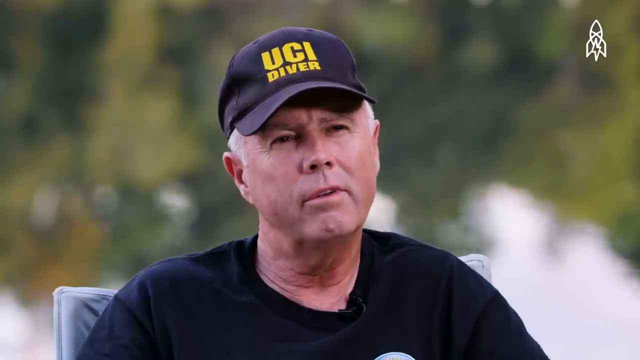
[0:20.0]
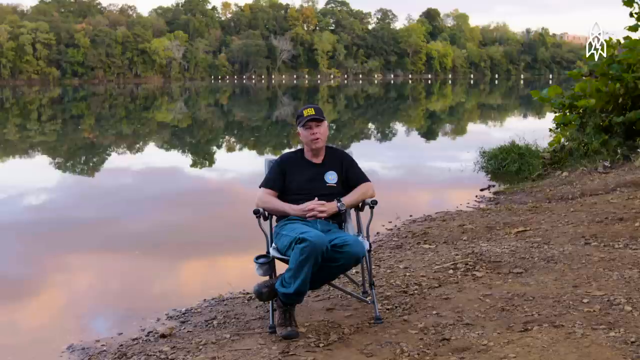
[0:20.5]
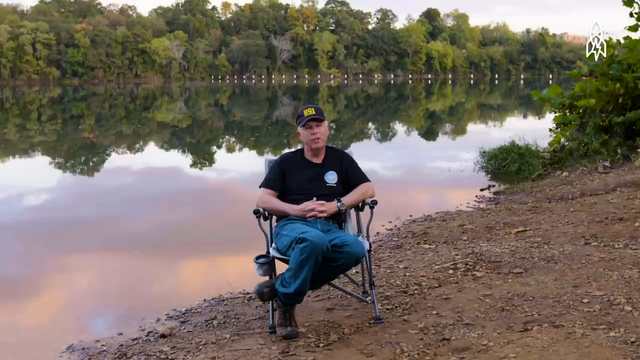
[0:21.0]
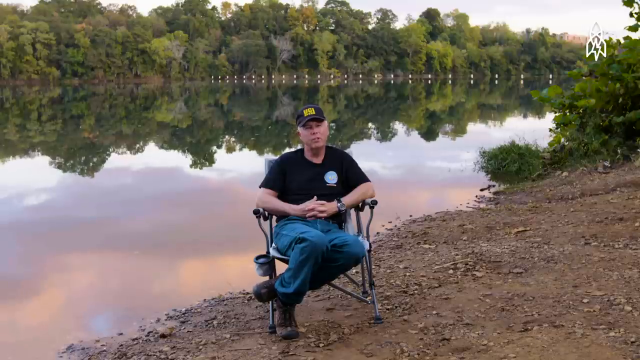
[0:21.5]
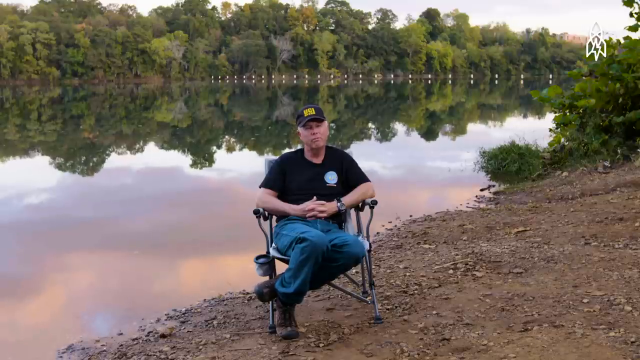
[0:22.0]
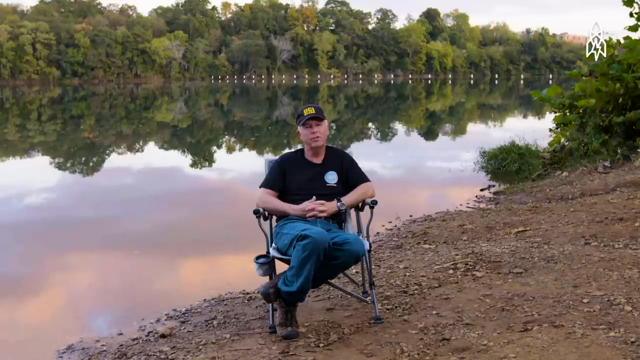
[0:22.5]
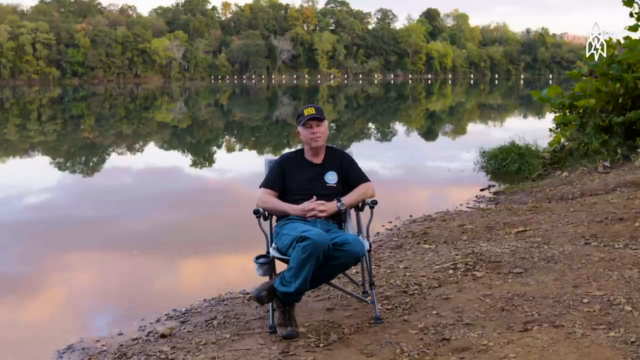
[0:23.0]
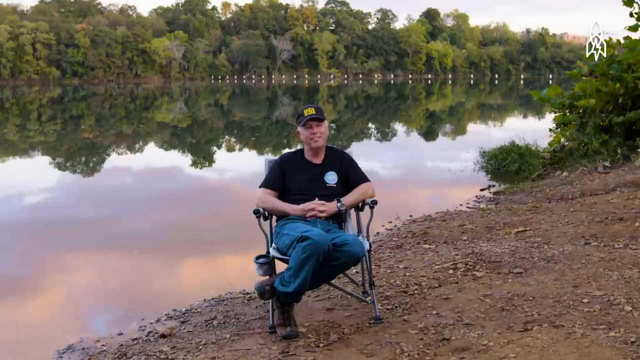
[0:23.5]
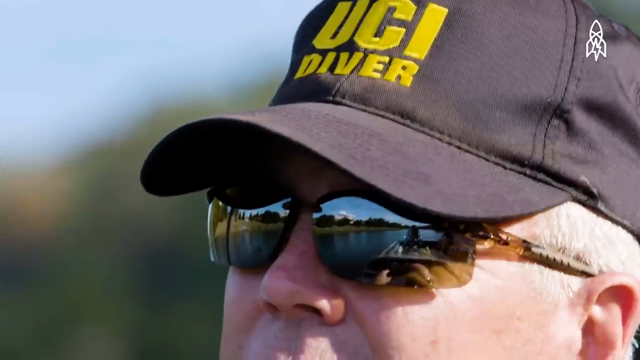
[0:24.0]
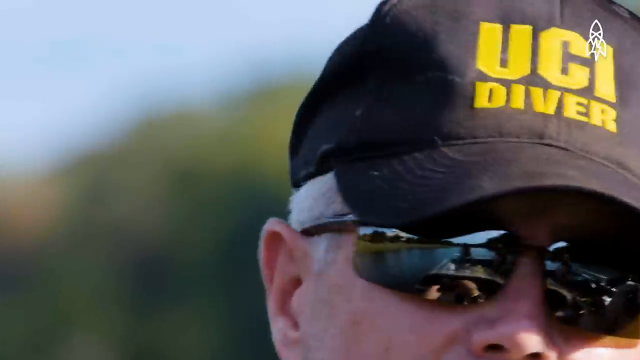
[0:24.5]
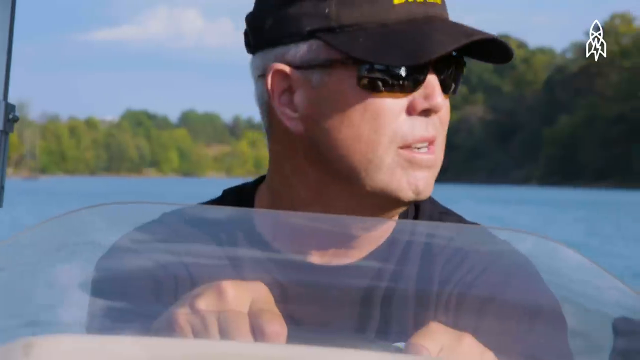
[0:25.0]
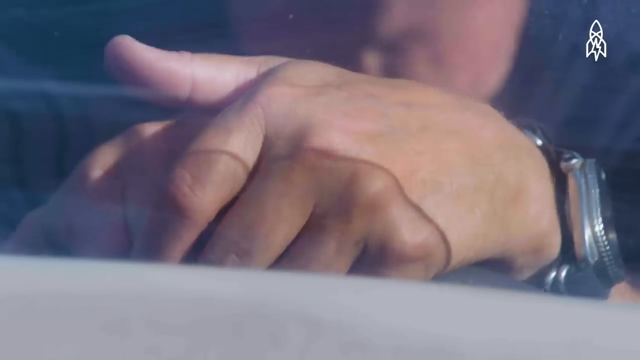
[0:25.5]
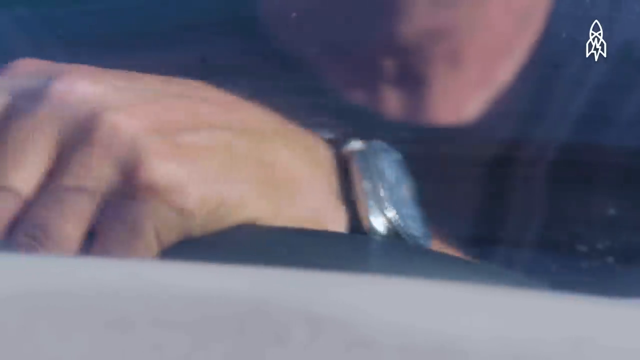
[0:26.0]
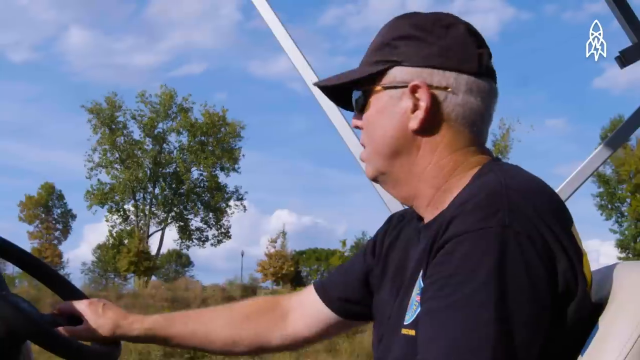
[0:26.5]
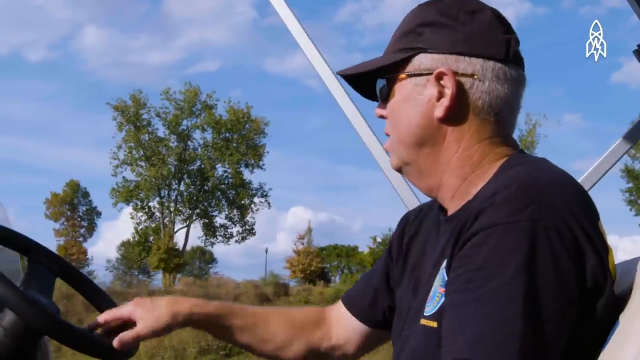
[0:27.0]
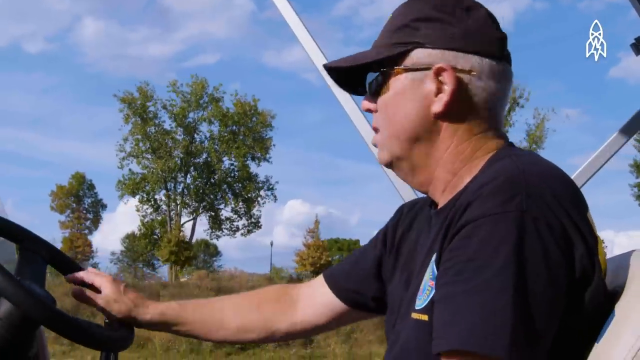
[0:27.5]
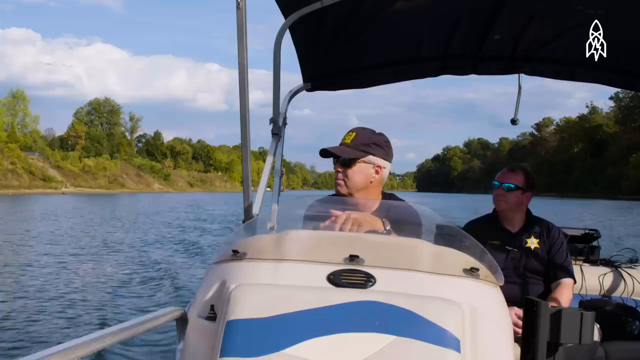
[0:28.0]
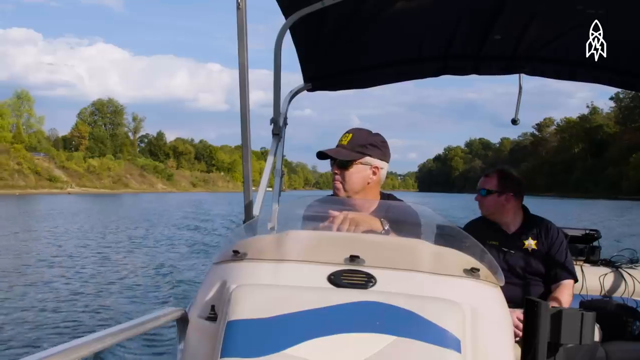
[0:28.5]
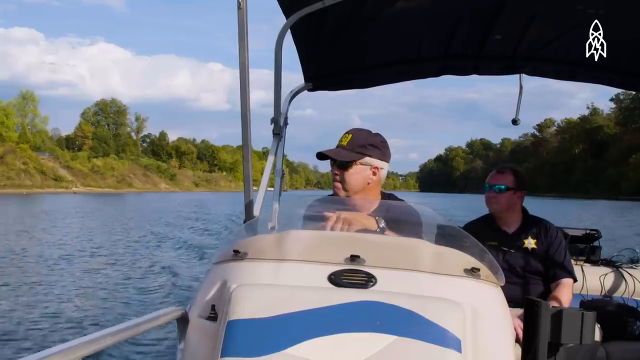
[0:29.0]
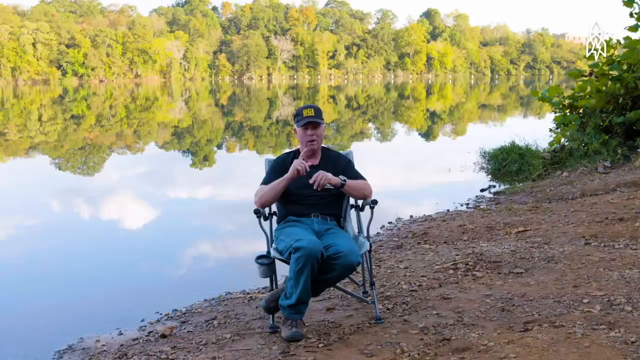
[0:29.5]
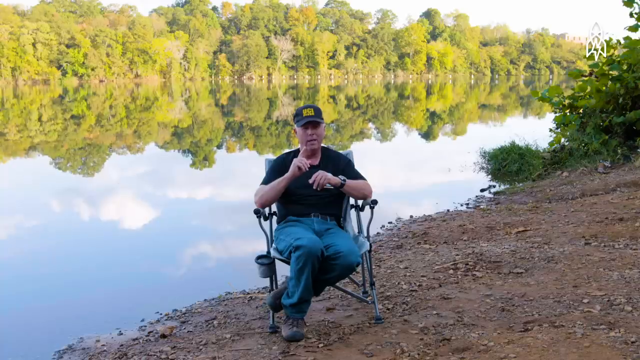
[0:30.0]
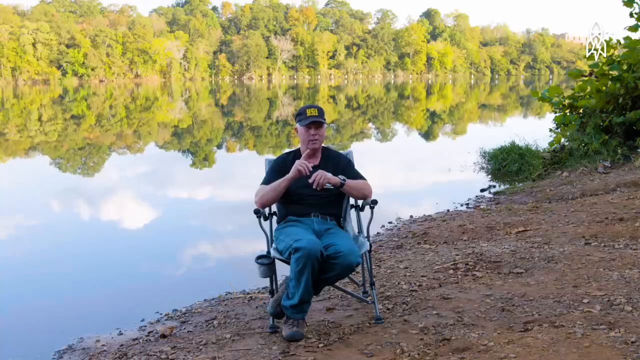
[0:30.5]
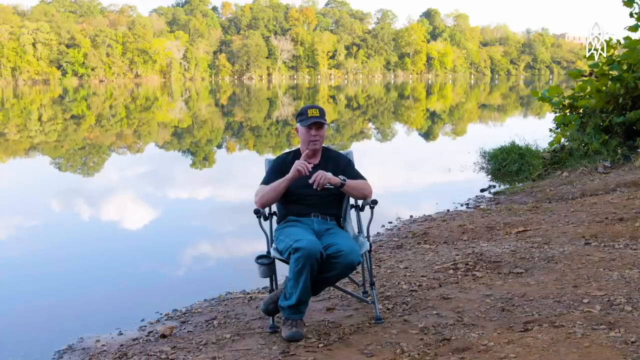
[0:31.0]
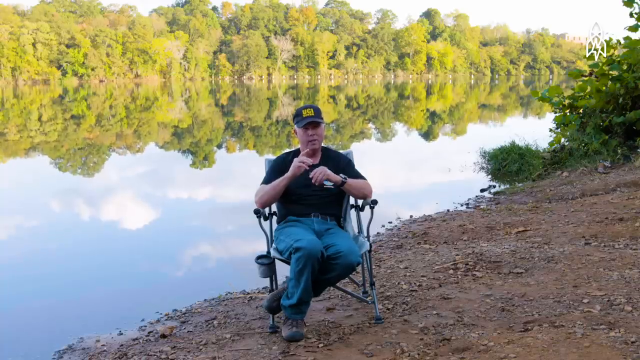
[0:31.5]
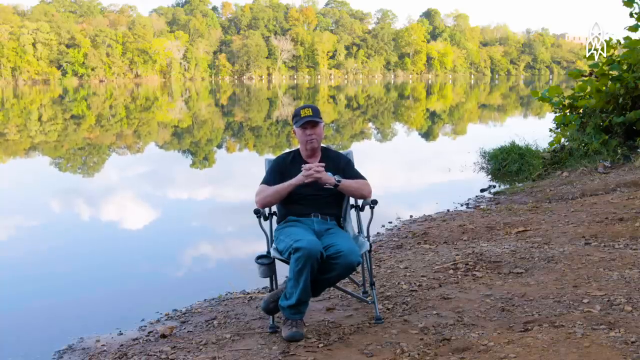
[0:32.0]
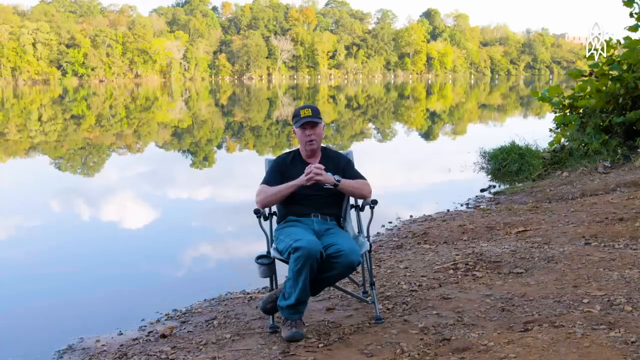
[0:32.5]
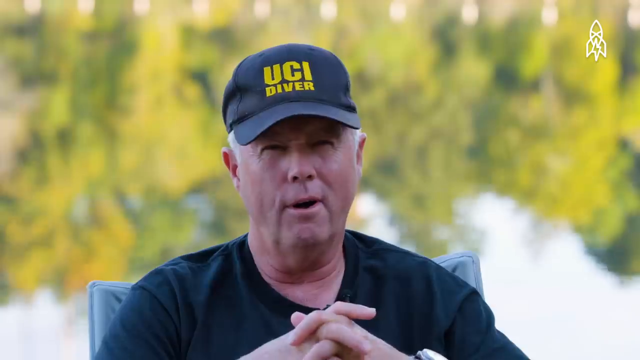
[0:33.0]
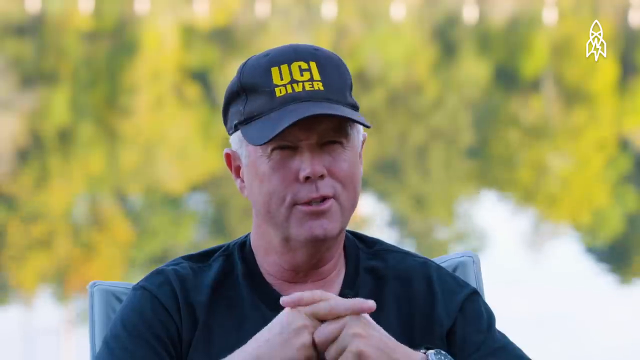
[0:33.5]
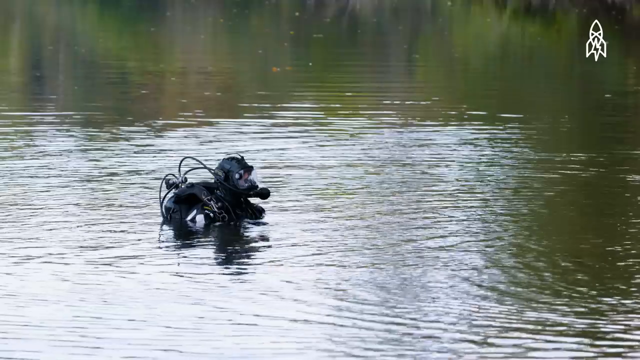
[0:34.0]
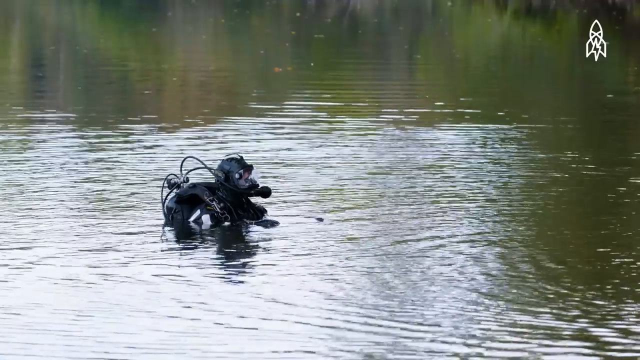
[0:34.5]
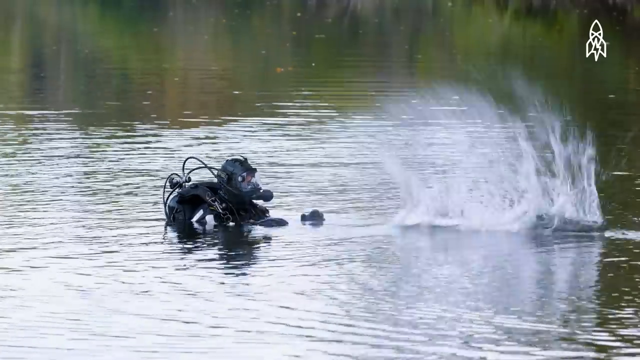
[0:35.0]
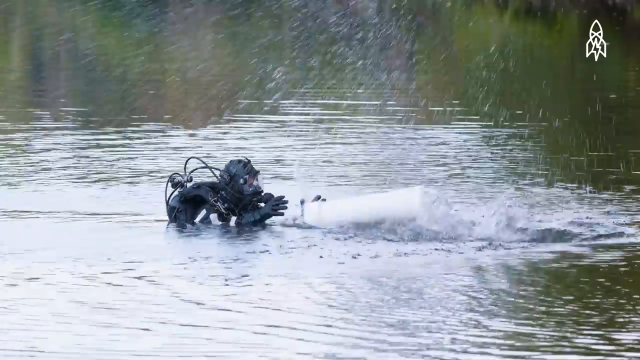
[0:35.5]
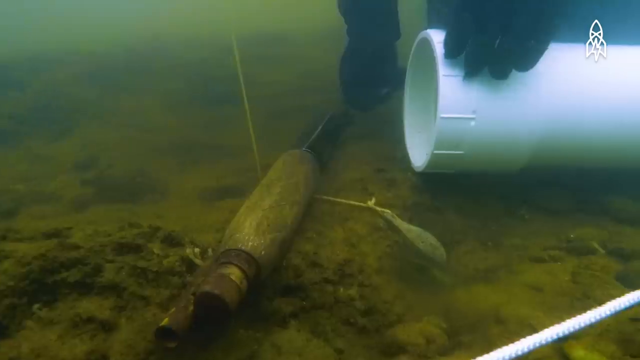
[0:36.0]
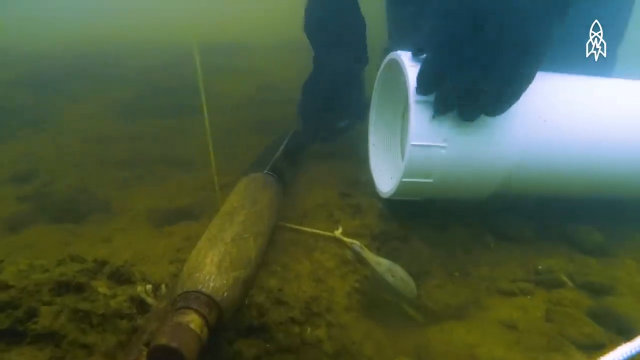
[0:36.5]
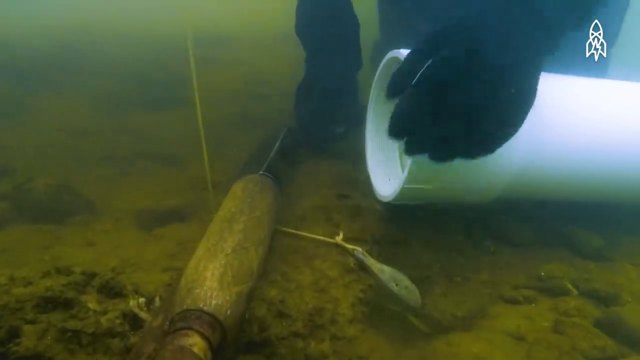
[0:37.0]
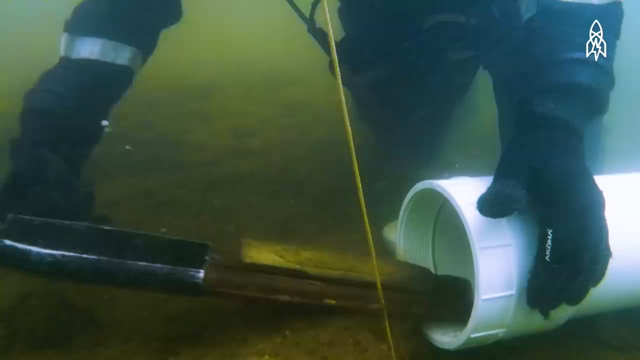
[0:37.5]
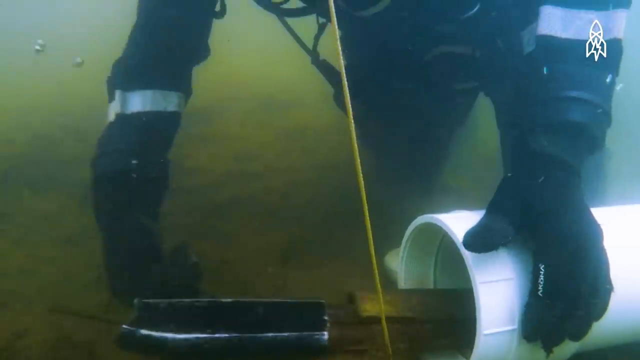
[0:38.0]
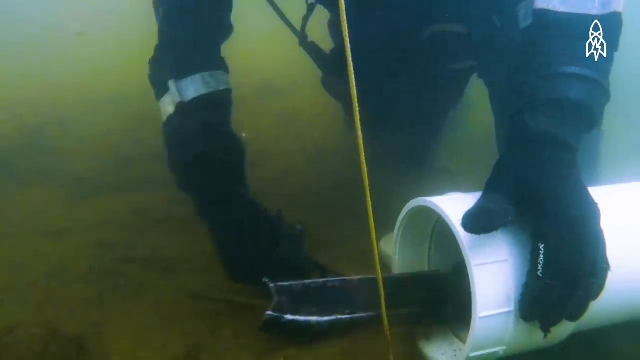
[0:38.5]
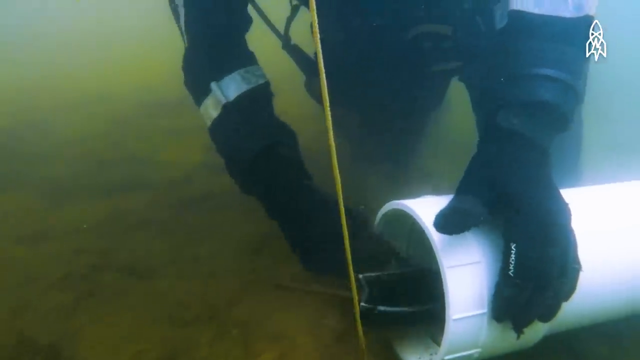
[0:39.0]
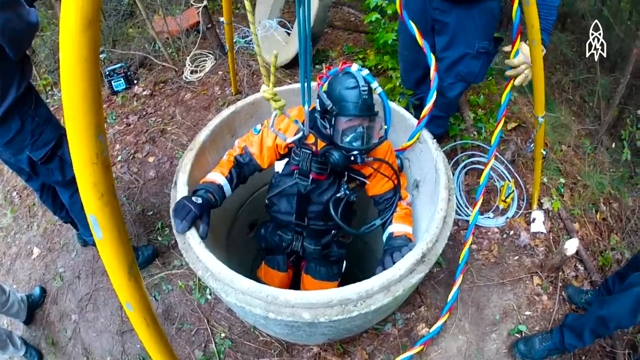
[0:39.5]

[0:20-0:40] A heading reads "diving for evidence, a great story". The diver sits on a chair with a big river behind him and green trees around him; he appears to be being interviewed, and he wears a black shirt and jeans. The scene transitions to him in a boat, looking side to side for evidence with another man. Clear underwater footage then shows him picking up evidence; he has a white container with him, puts the evidence inside and closes it.